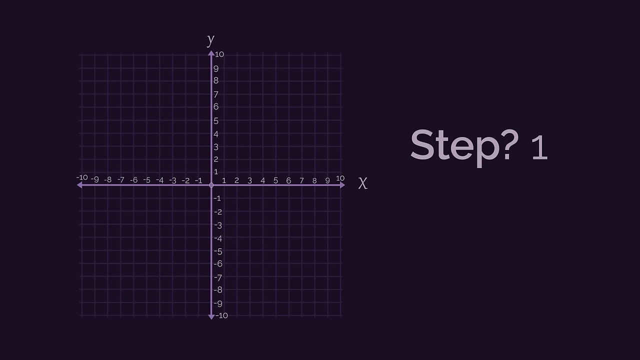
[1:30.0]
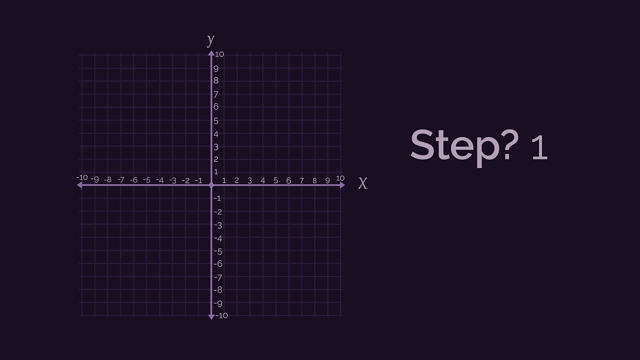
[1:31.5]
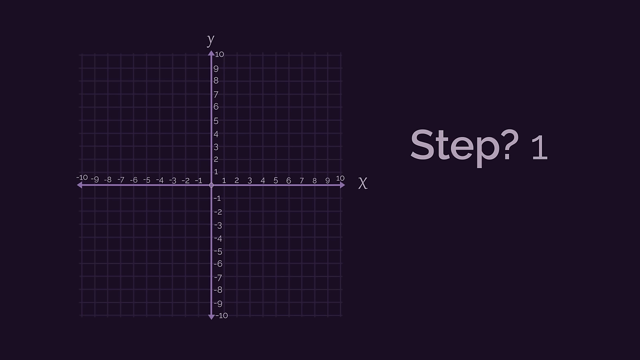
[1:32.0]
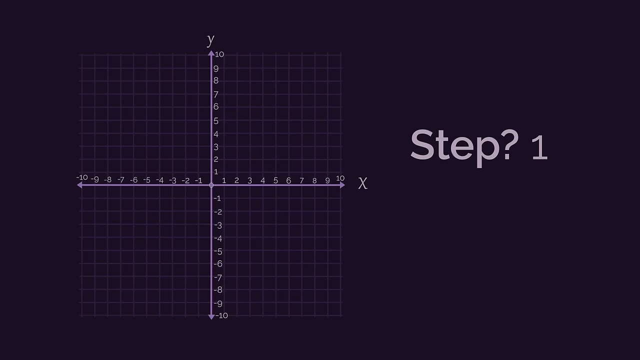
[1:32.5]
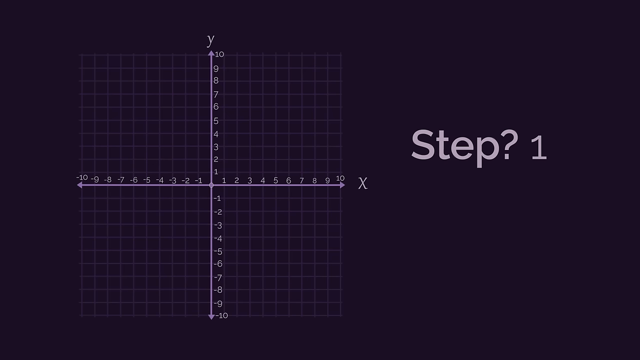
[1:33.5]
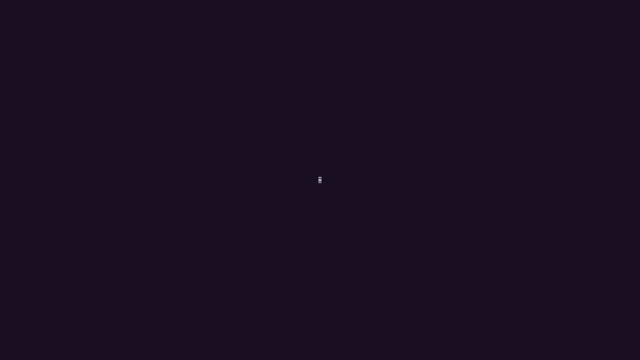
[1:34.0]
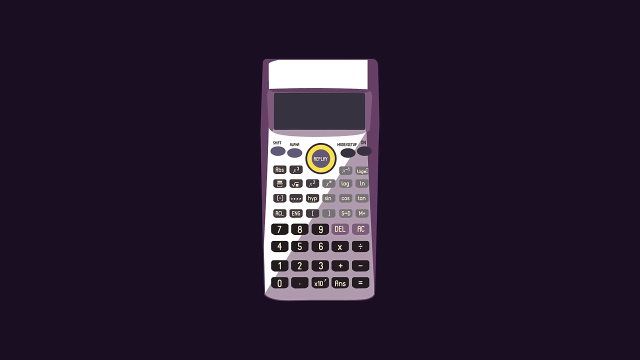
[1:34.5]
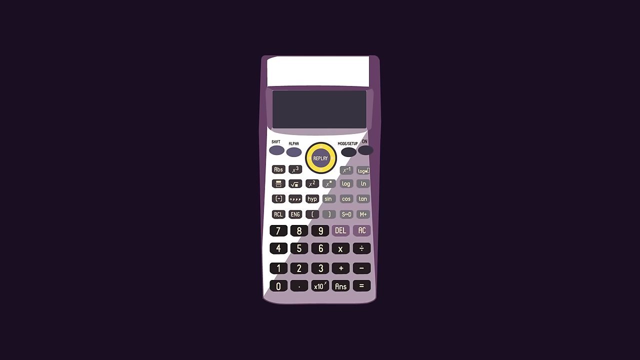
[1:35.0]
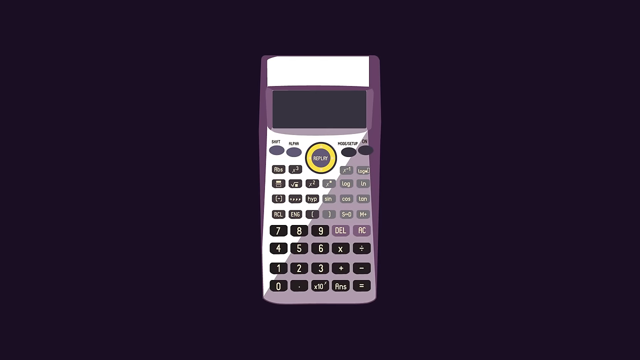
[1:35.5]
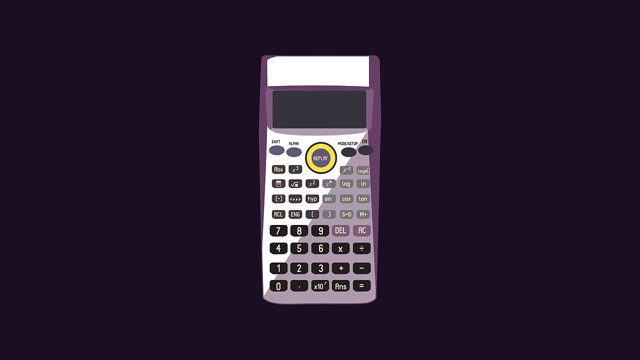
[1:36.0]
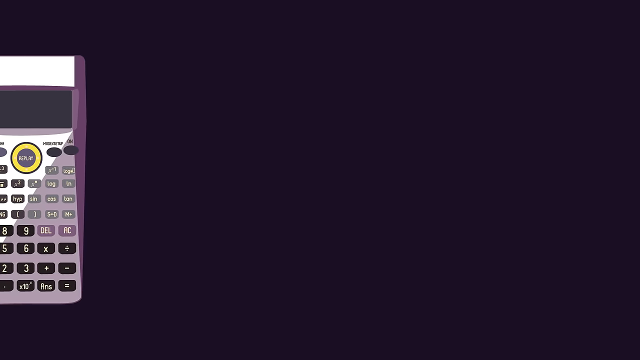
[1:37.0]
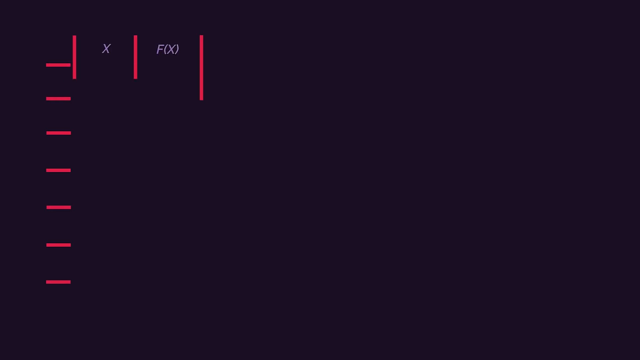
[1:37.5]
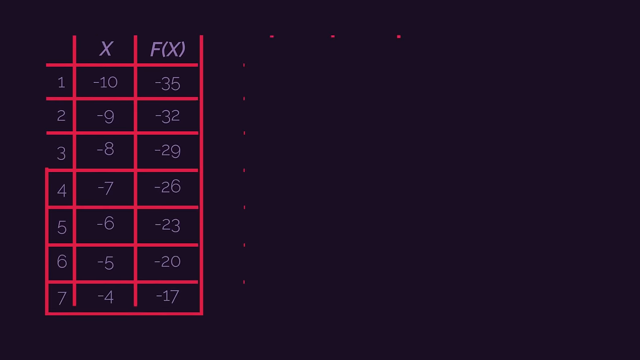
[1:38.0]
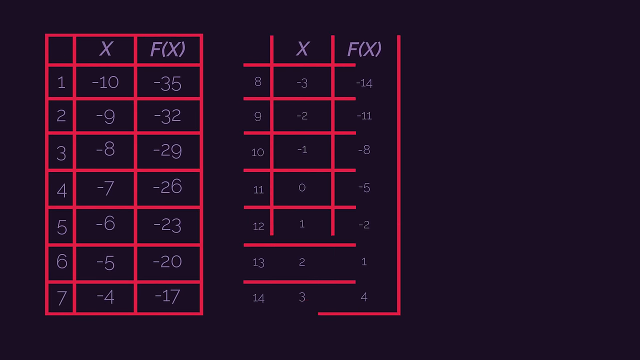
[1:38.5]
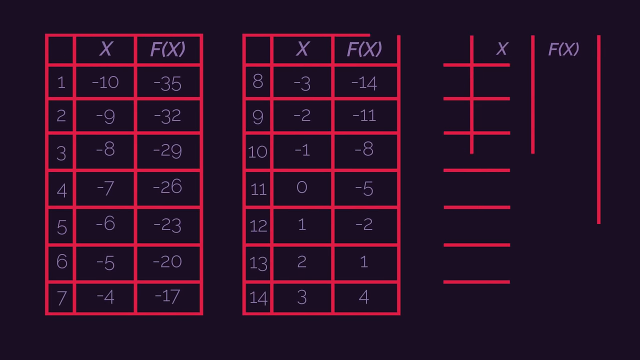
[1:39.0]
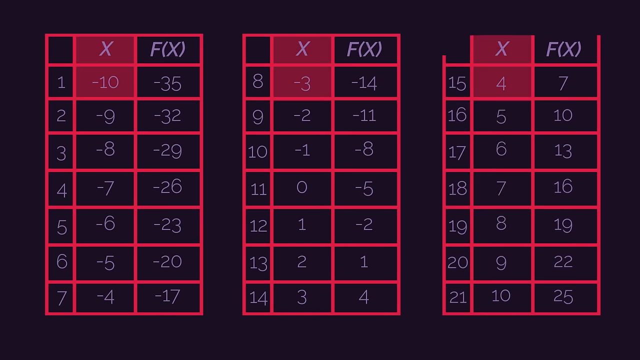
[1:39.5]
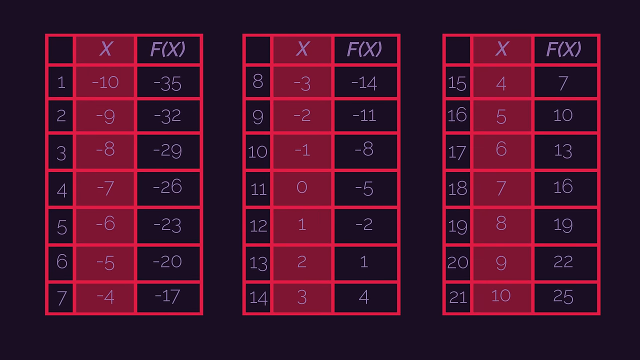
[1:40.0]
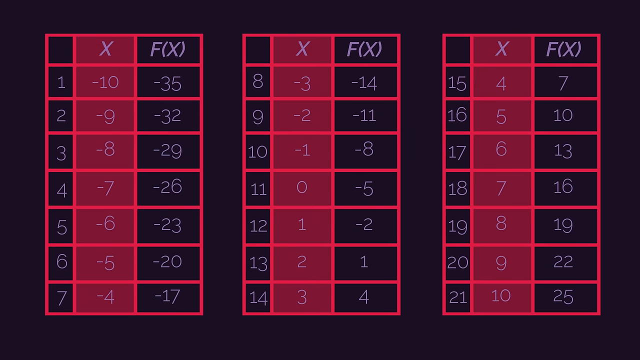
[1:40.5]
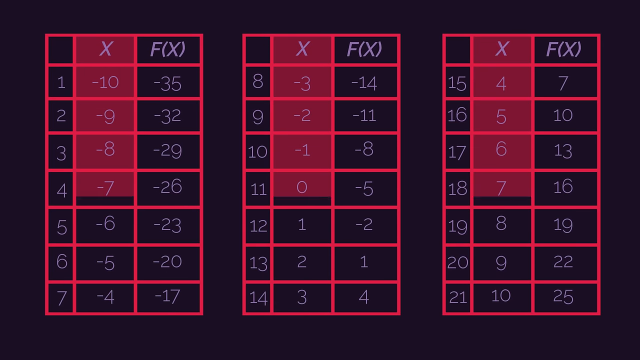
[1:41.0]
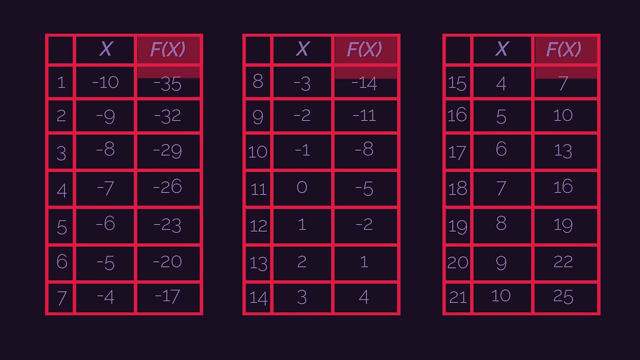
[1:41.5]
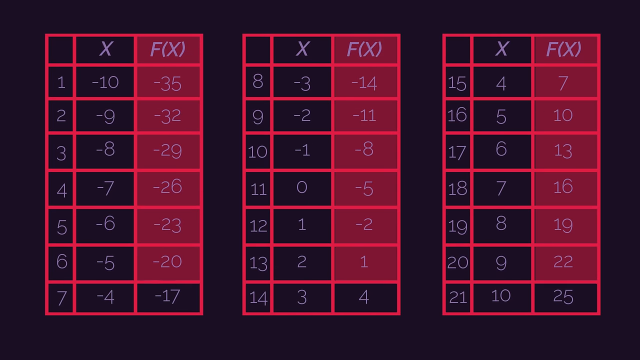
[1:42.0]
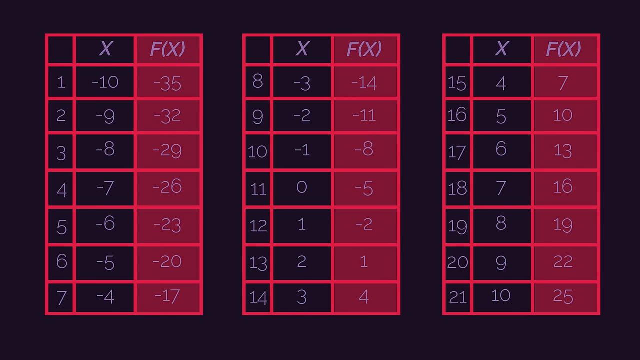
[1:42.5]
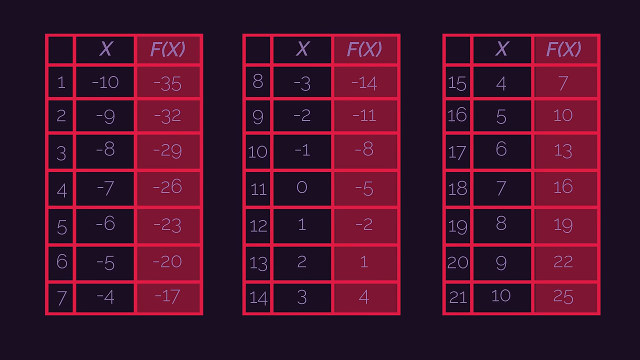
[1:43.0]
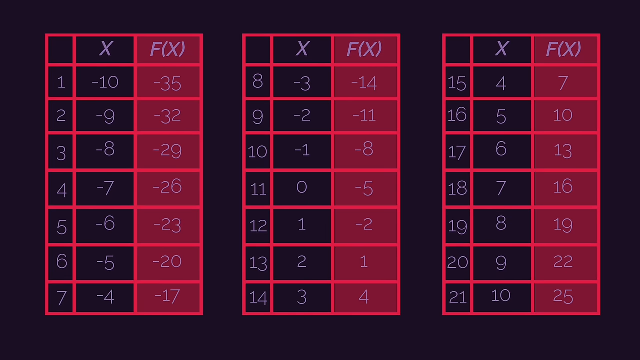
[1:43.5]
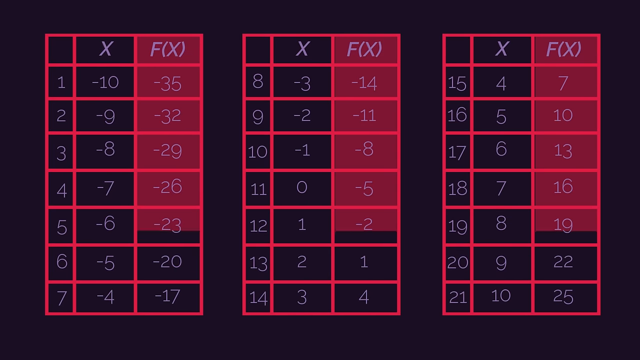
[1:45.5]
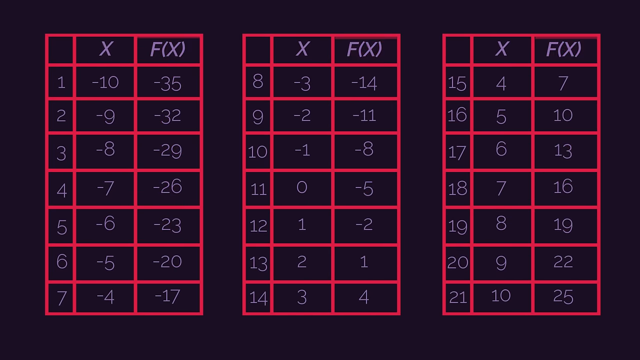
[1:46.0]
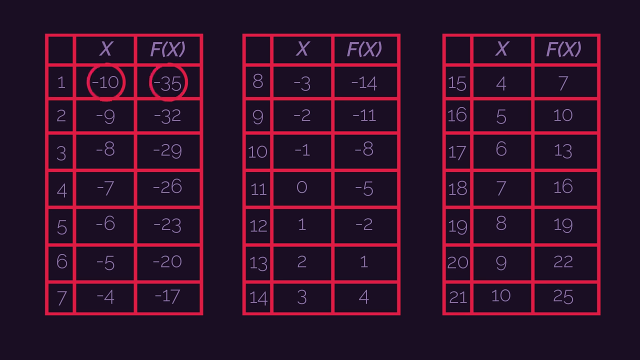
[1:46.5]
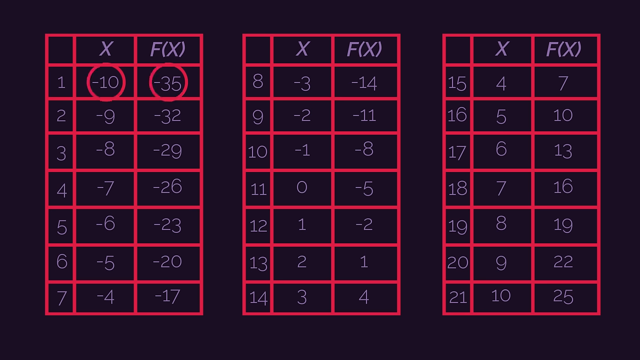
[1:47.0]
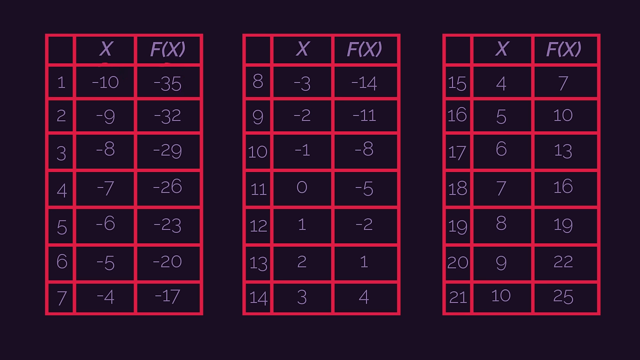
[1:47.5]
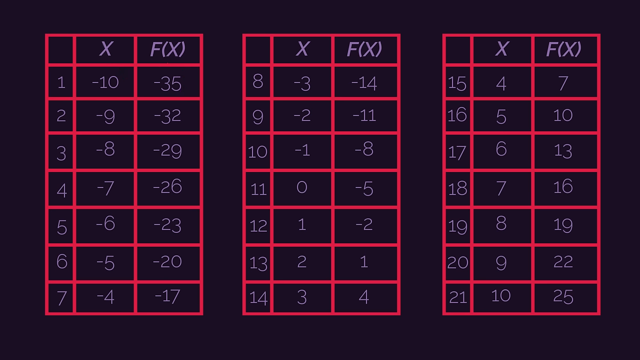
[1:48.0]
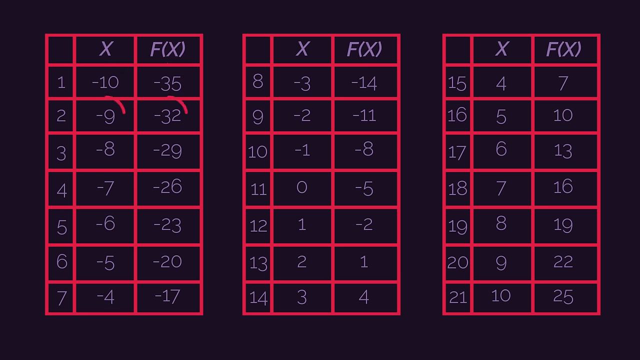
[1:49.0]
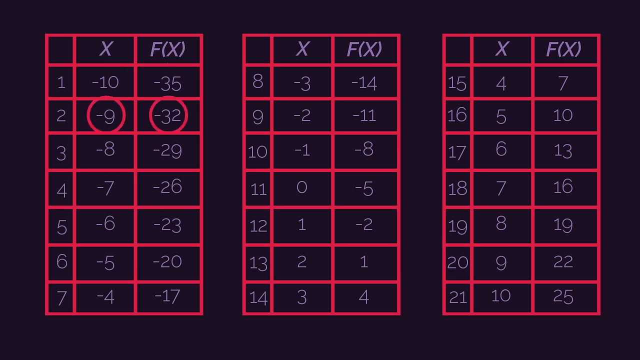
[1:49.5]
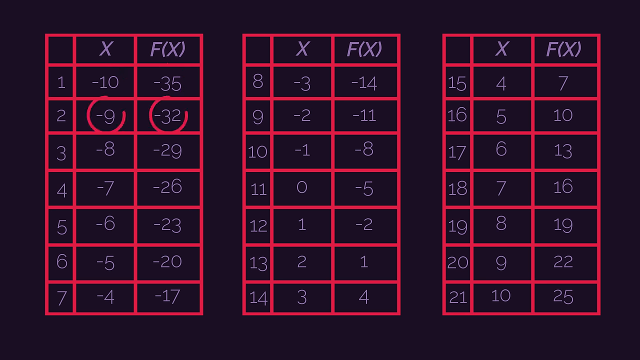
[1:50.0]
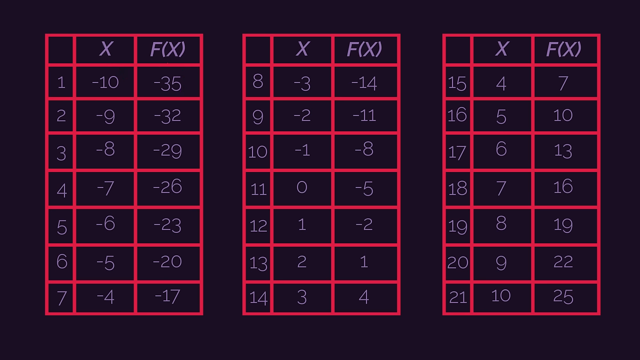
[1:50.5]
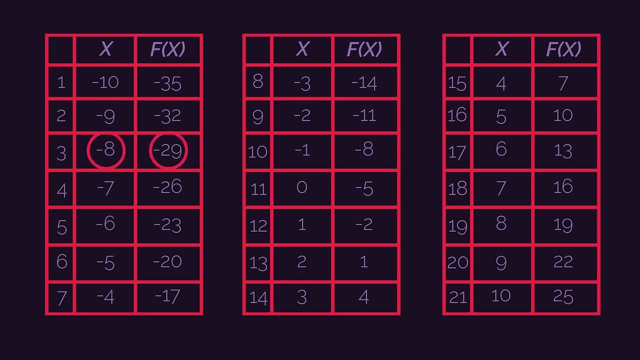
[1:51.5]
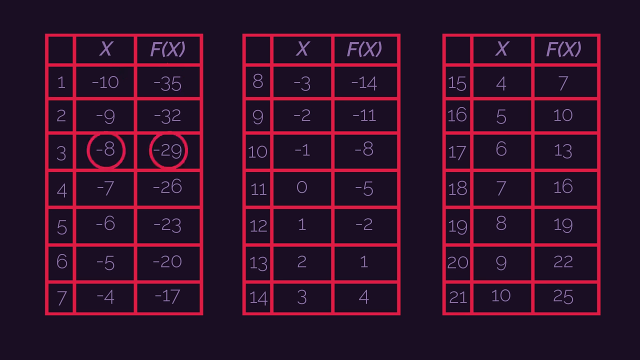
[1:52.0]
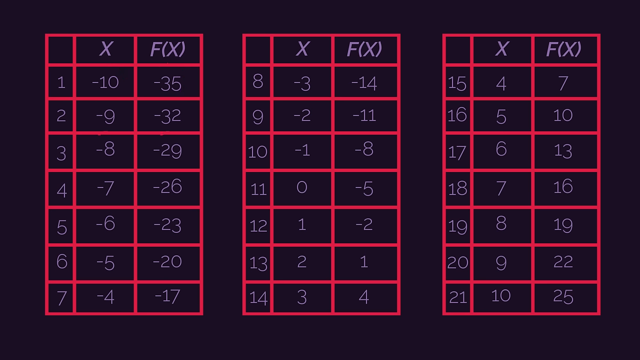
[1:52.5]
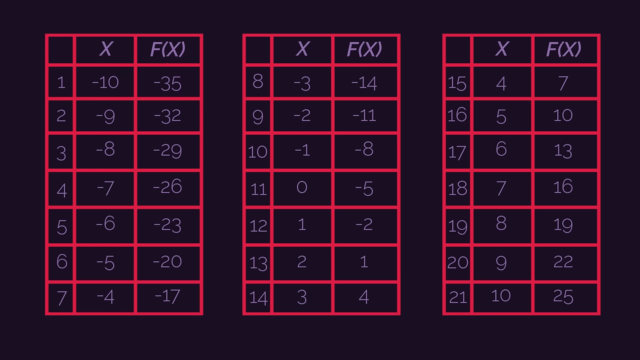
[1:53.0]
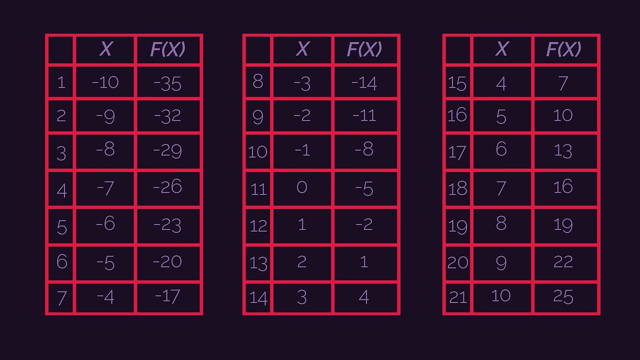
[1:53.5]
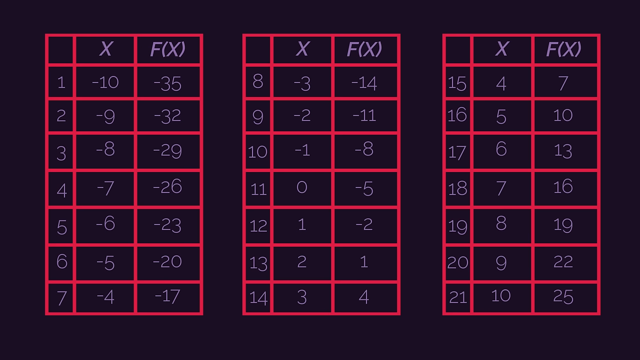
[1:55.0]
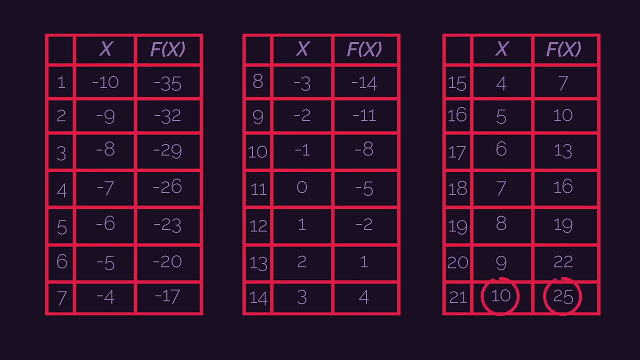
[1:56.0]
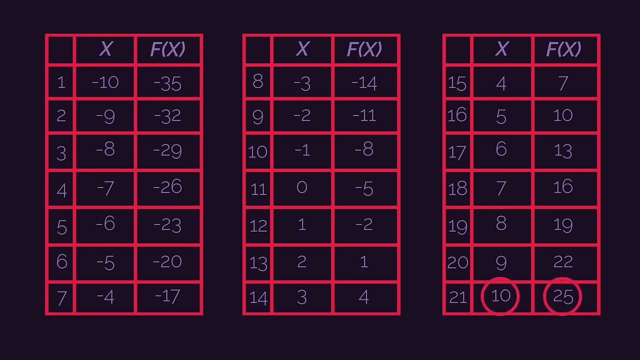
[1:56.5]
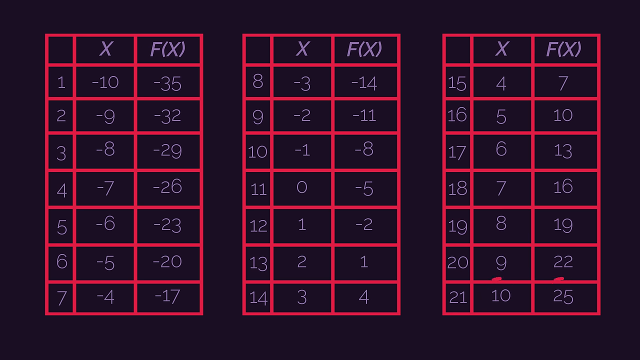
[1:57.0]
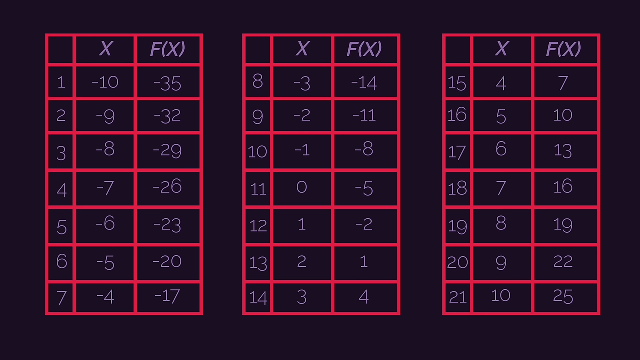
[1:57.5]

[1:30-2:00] A purple line graph is shown, with the x-axis ranging from negative 10 to positive 10 and the y-axis also ranging from negative 10 to positive 10. A caption in white text to the right says "Step 1." A purple calculator then appears, with a white rectangle on top, black, purple, and gray buttons, and a replay button surrounded by a yellow circle. The calculator slides out of view, and three function tables are shown with 21 functions: functions 1 through 7 on the first table, 8 through 14 on the second, and 15 through 21 on the third. Each table shows a value for x and a value for f of x. The x values are highlighted in red and then unhighlighted, and then the f of x values are highlighted in red and unhighlighted. The values for the first function are encircled: x is negative 10 and f of x is negative 35. The values for the other functions are encircled one by one, then the video jumps to the end and circles the values for the final function, 21, where x is 10 and f of x is 25.